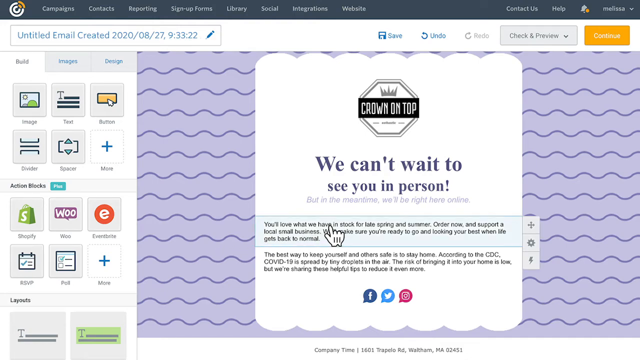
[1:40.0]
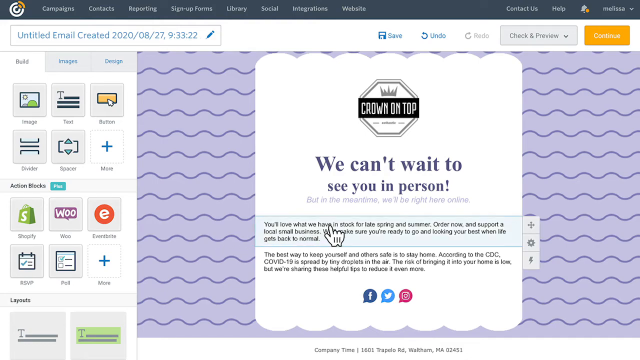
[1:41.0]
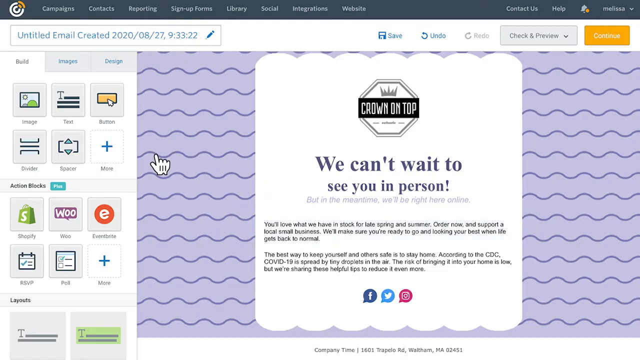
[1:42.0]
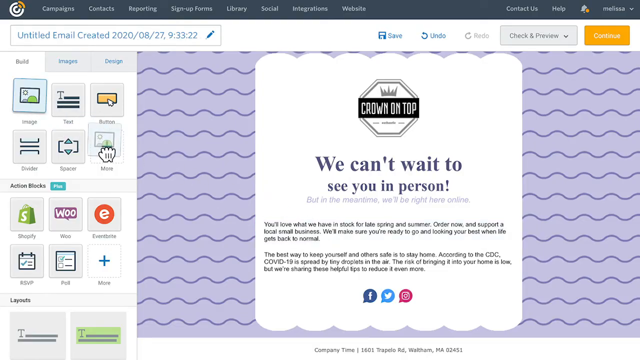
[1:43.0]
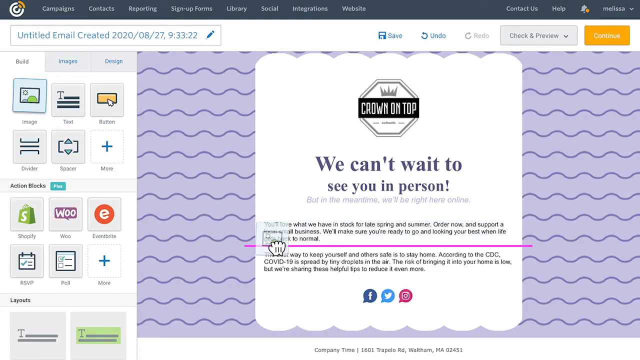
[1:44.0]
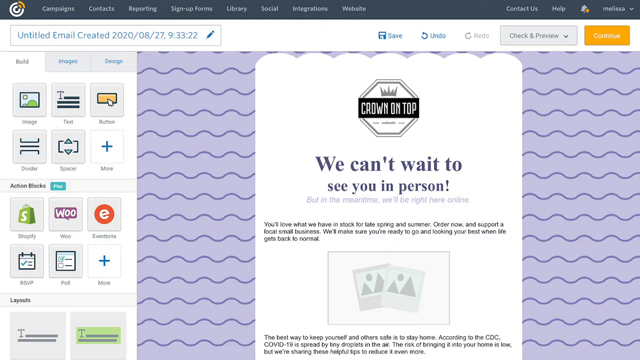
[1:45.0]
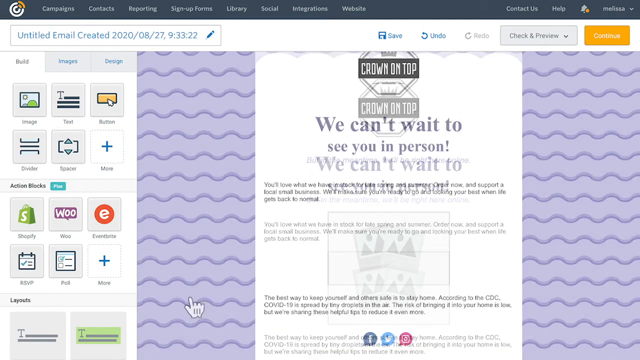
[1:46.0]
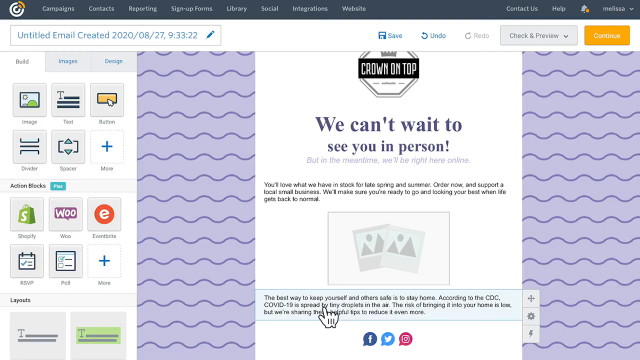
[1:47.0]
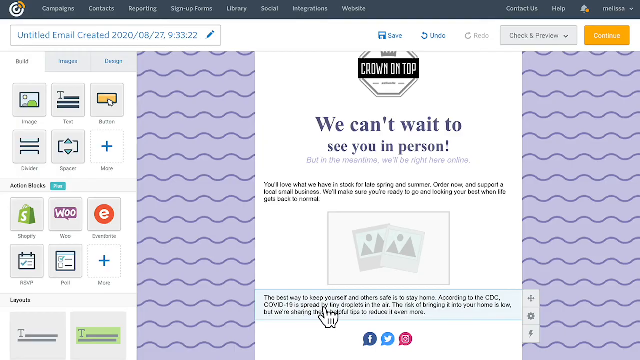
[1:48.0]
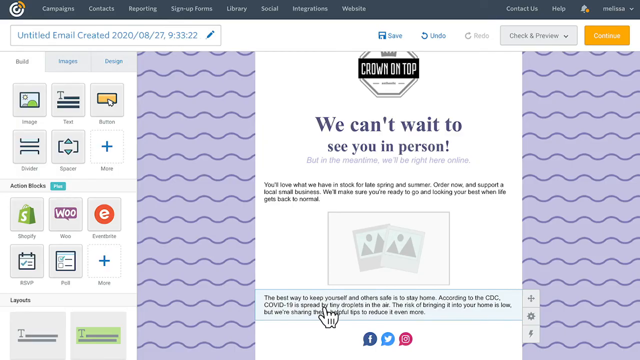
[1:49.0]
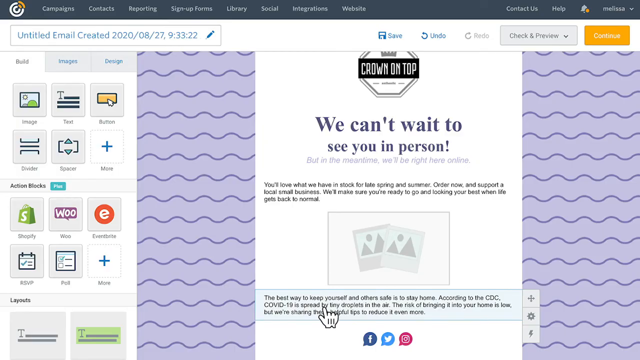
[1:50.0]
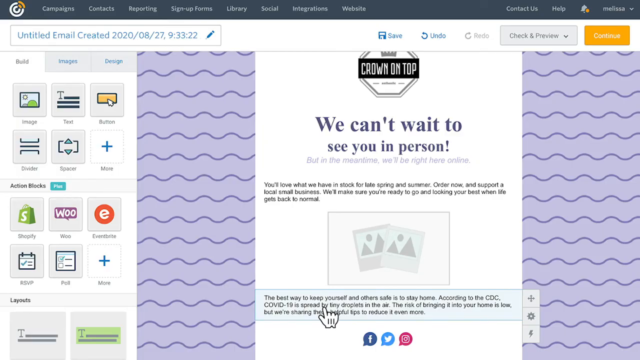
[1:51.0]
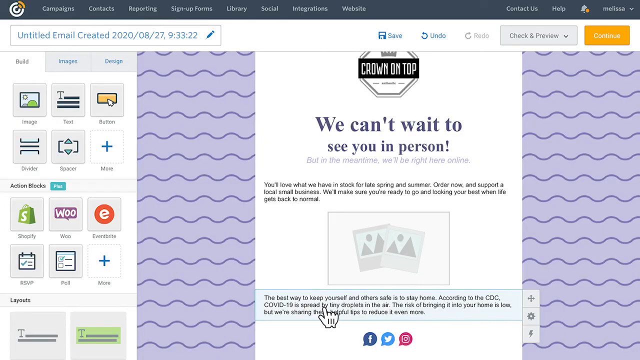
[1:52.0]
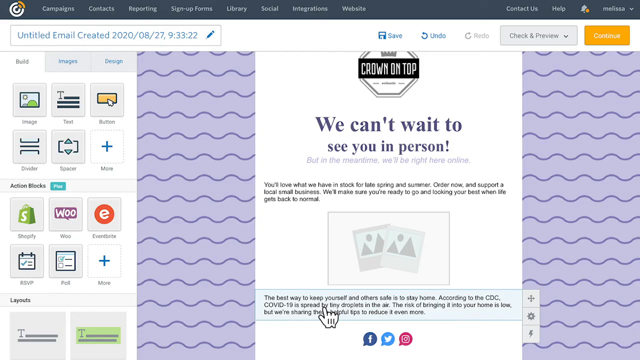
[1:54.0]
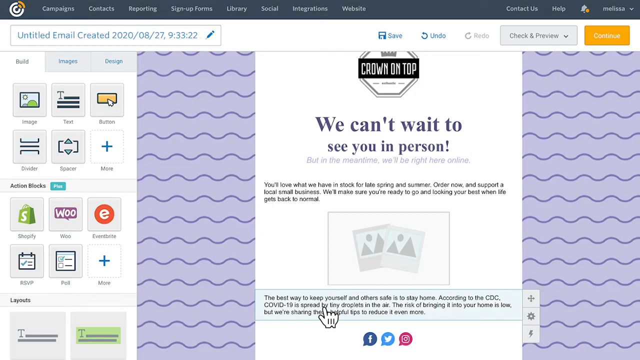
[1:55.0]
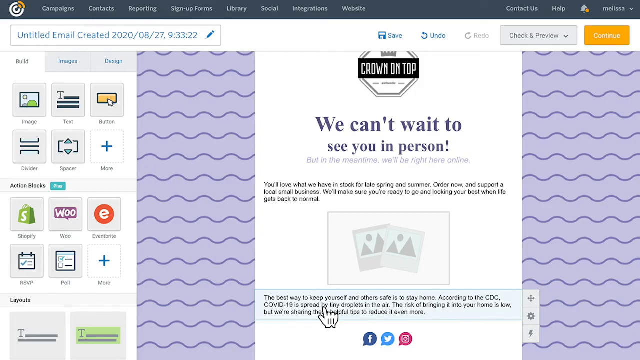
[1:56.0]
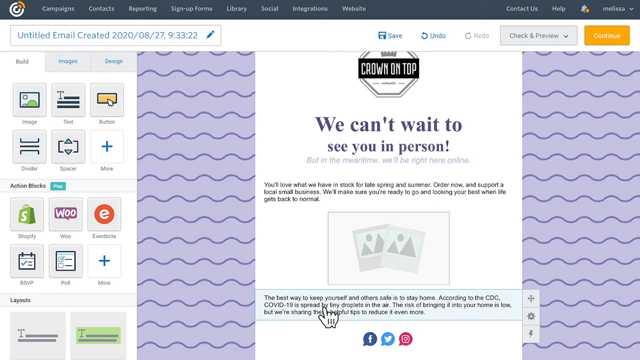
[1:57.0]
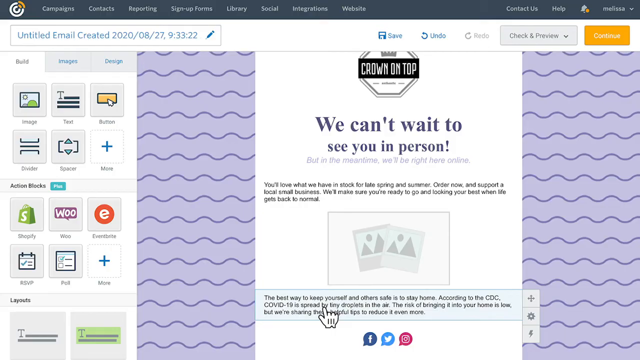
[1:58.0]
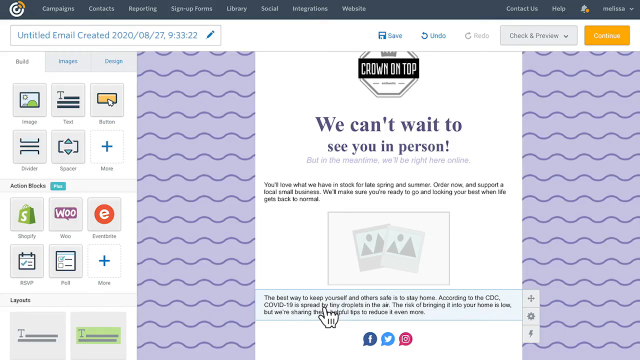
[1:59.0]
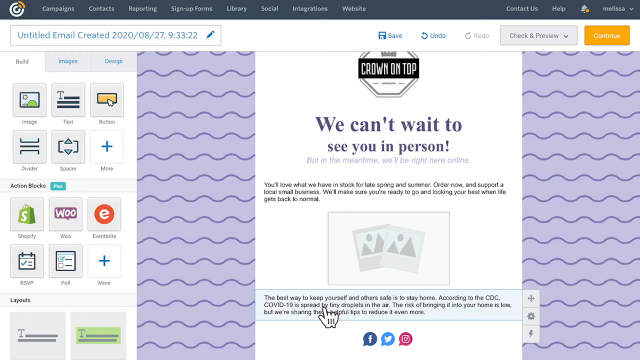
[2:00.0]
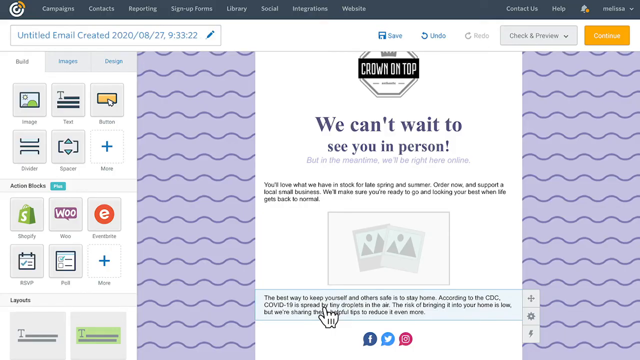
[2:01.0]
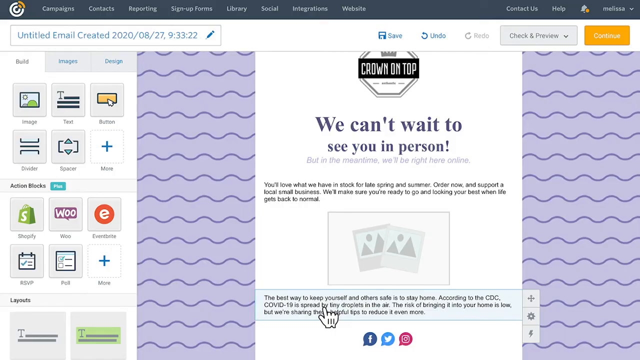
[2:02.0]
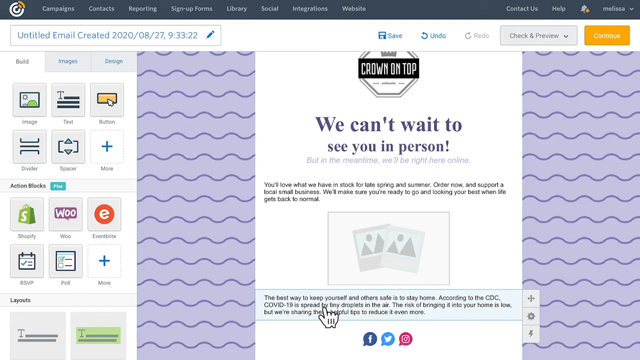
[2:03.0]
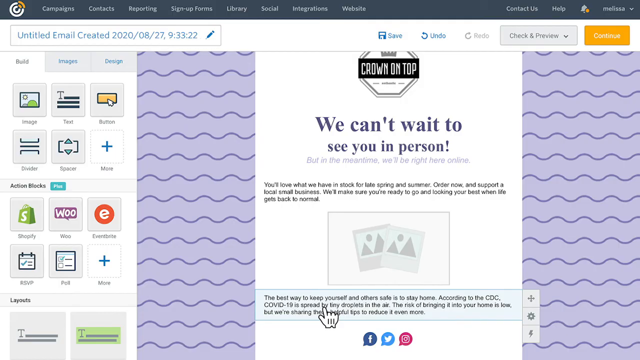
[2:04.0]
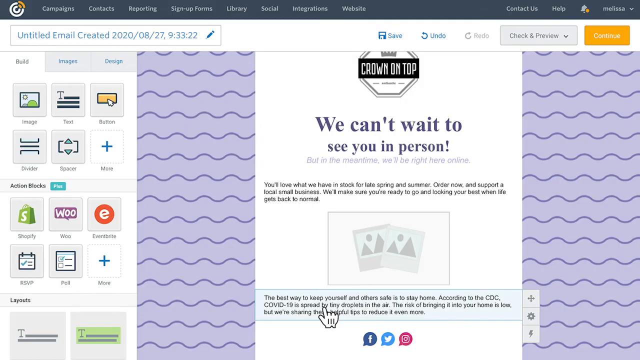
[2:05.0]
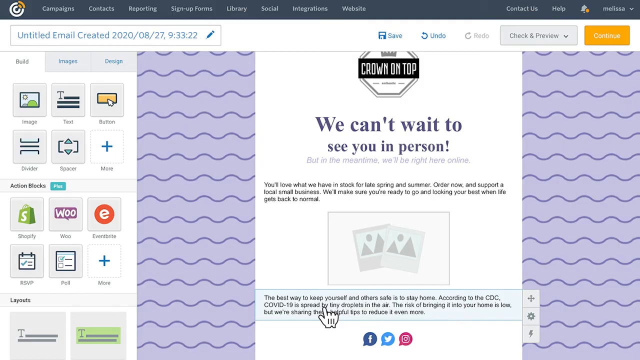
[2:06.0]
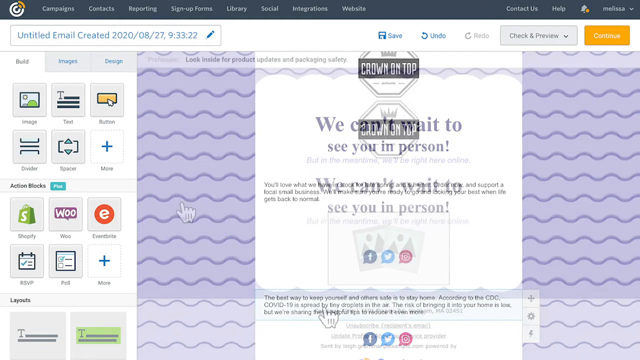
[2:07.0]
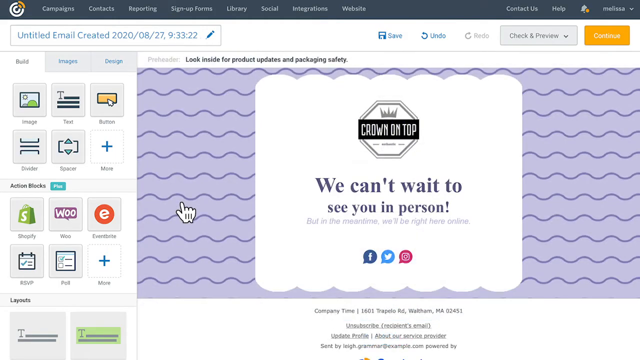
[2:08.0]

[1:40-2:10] Another image is added: the left-hand side is used to click Image, and it is dragged down between the two paragraphs, leaving a placeholder image there. The cursor then hovers over the second paragraph, the one about package safety tips. The headers are no longer visible, only the copy below them. For about ten seconds the video is paused and nothing happens. The logged-in user's username looks like Melissa. A menu at the top offers campaigns, contacts, reporting, sign-up forms, libraries, social integrations and website, and there are also a Save button, an Undo button, a Check and Preview drop-down menu and a Continue button.